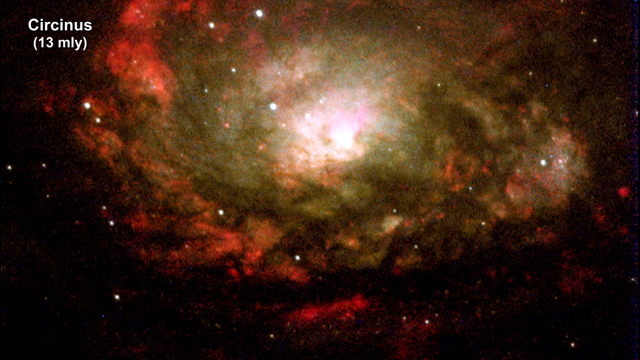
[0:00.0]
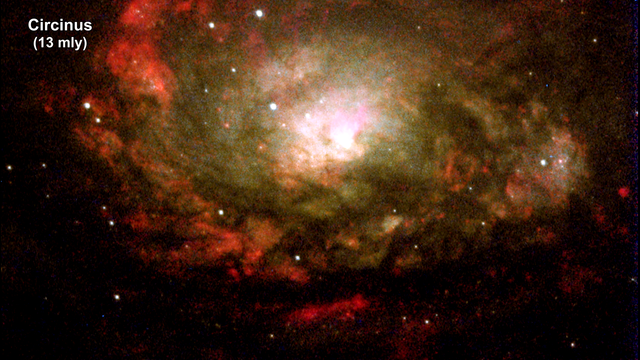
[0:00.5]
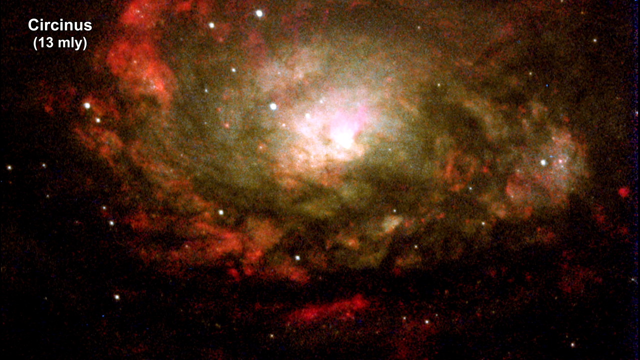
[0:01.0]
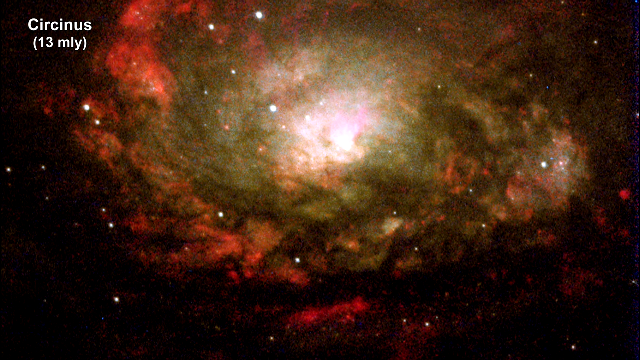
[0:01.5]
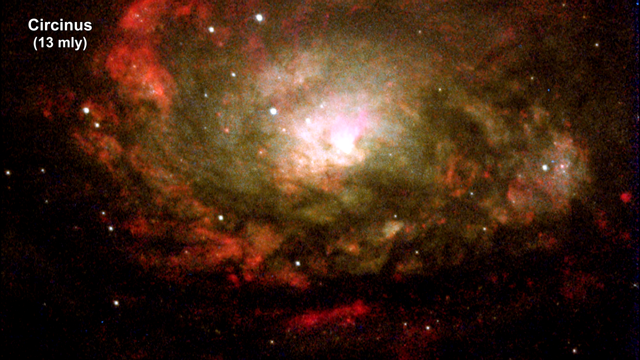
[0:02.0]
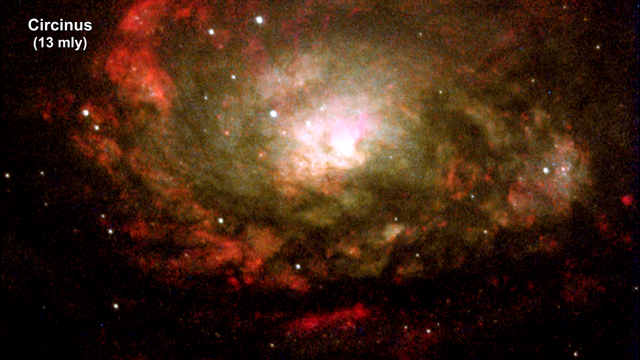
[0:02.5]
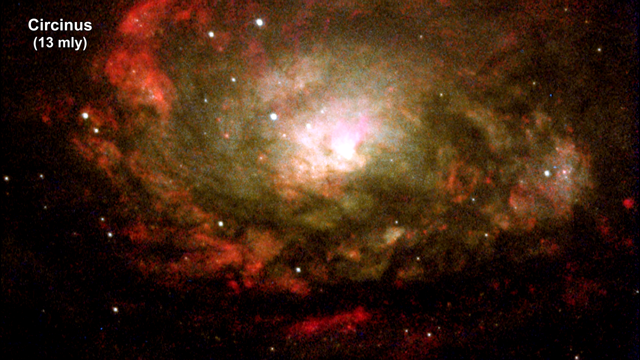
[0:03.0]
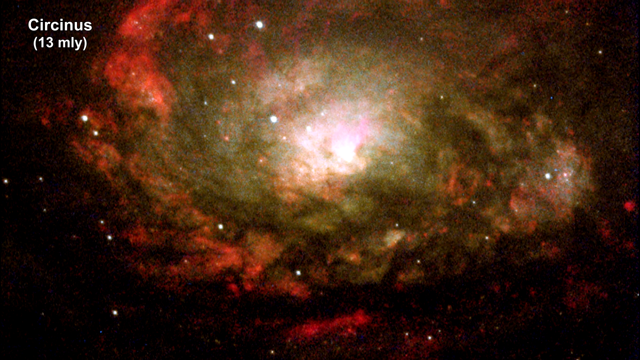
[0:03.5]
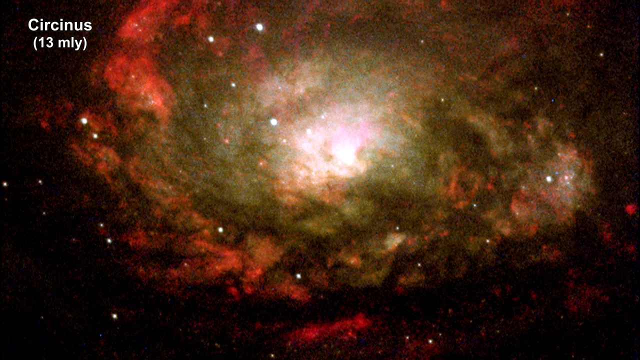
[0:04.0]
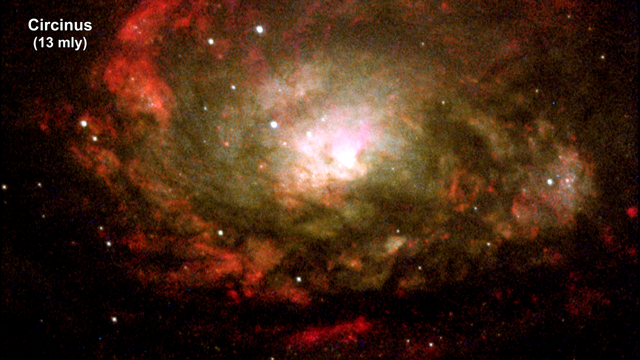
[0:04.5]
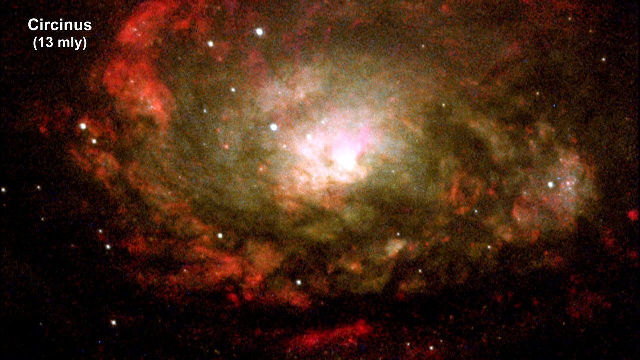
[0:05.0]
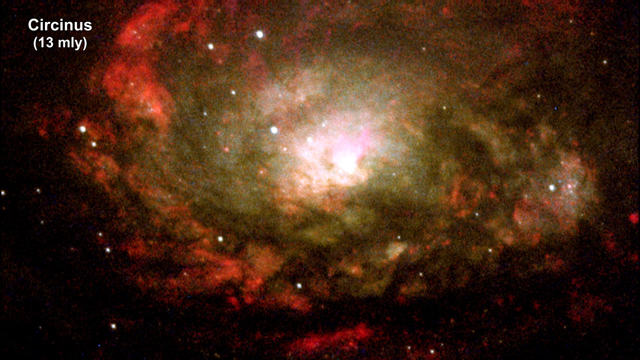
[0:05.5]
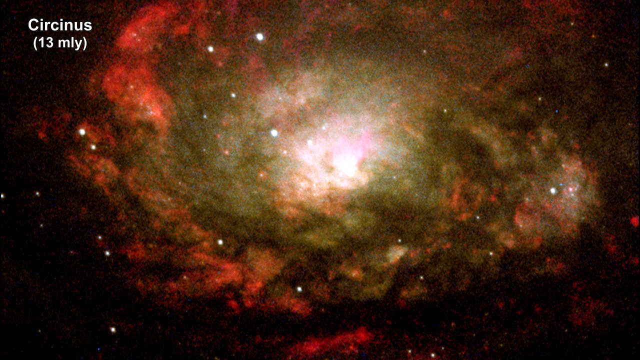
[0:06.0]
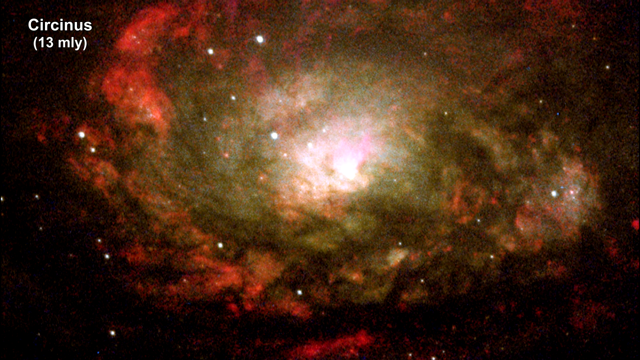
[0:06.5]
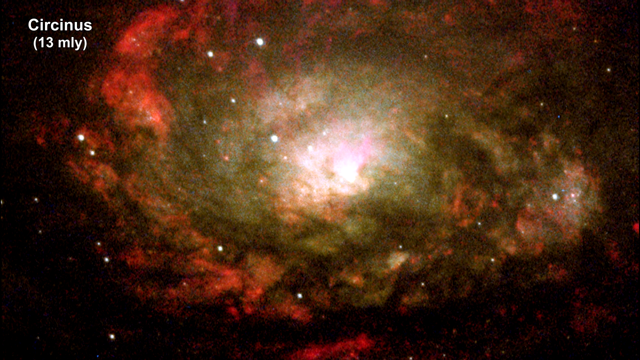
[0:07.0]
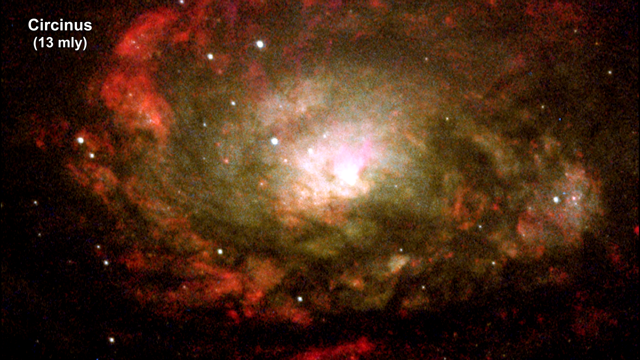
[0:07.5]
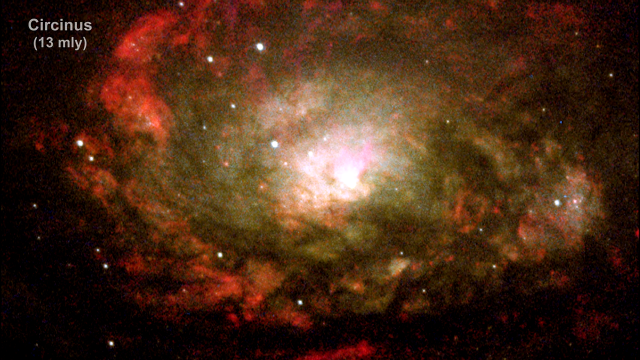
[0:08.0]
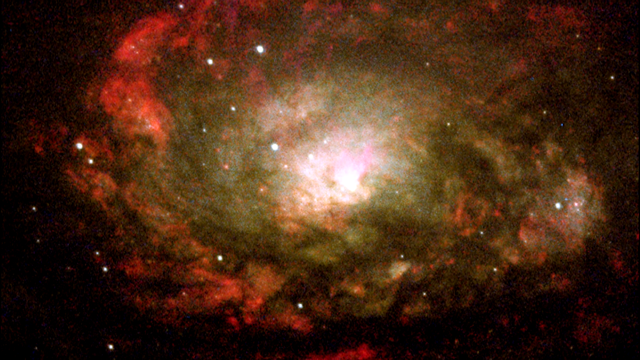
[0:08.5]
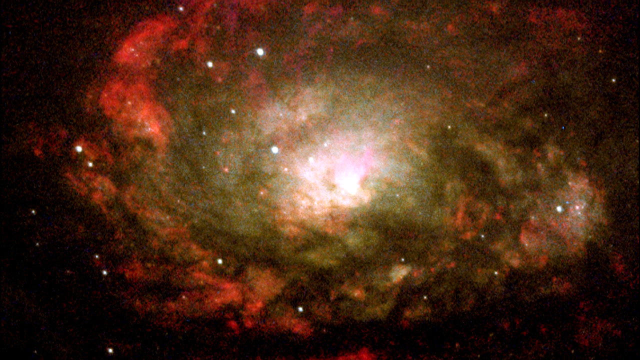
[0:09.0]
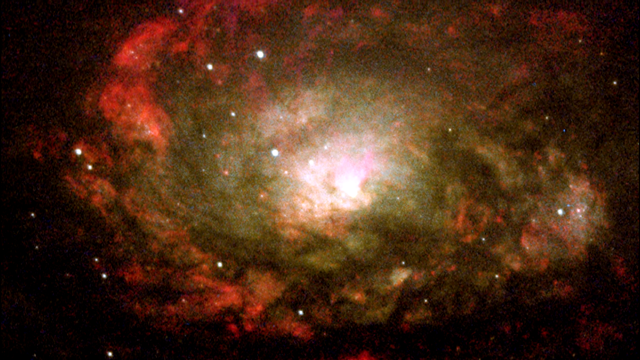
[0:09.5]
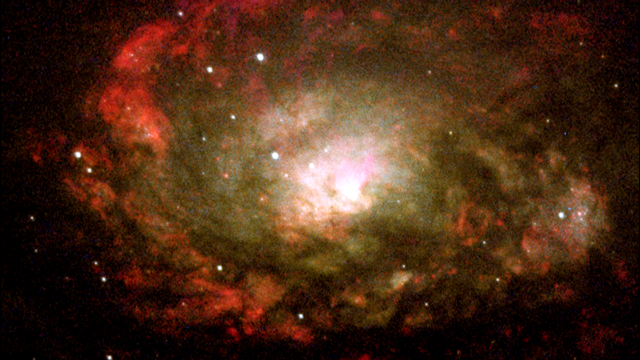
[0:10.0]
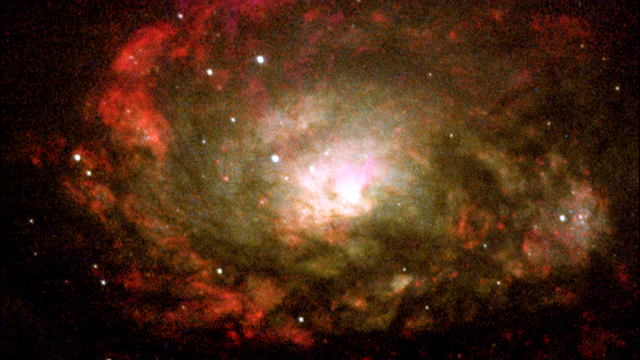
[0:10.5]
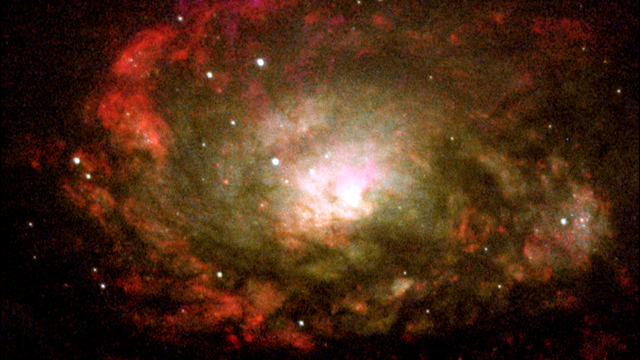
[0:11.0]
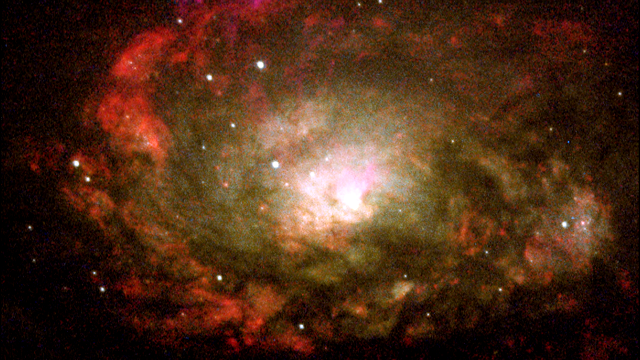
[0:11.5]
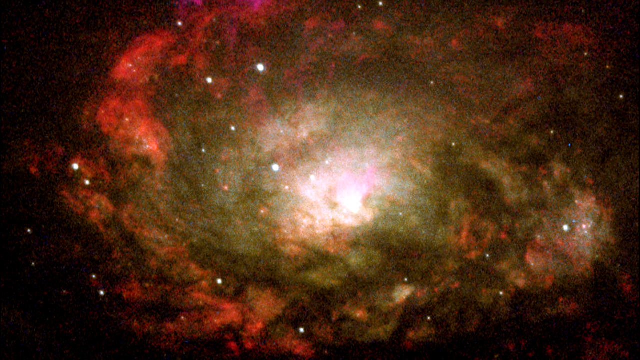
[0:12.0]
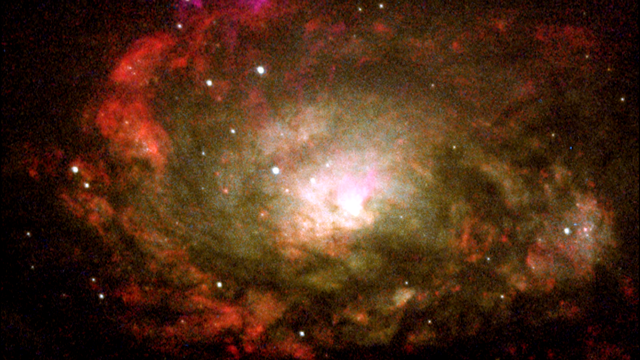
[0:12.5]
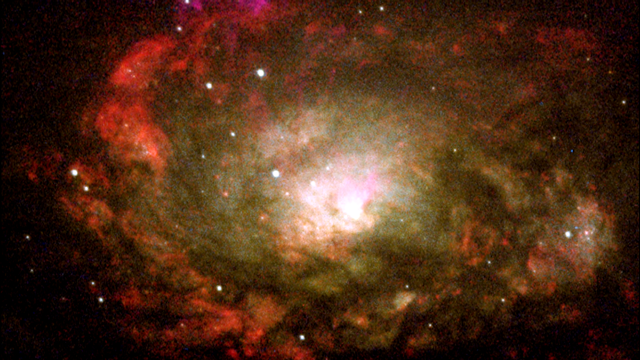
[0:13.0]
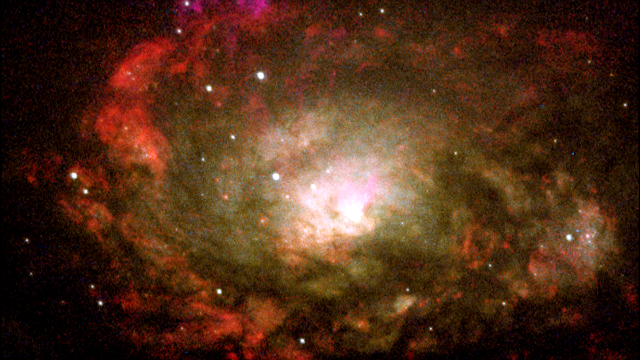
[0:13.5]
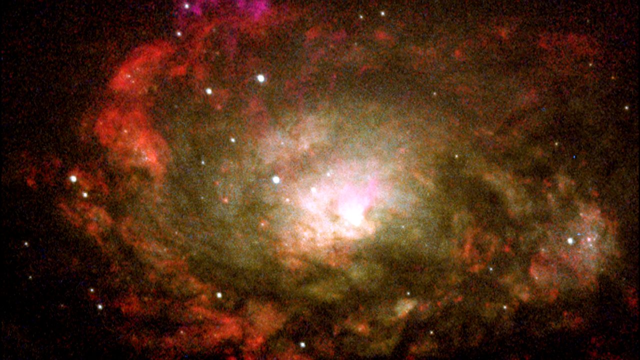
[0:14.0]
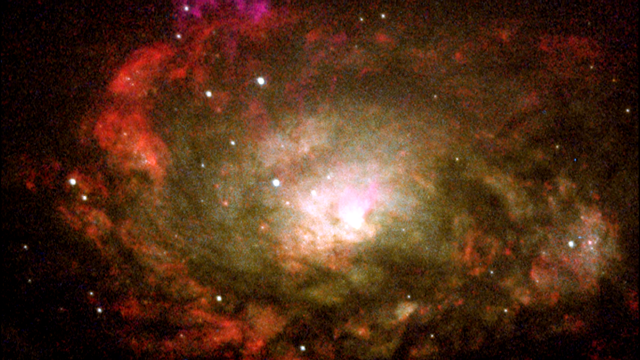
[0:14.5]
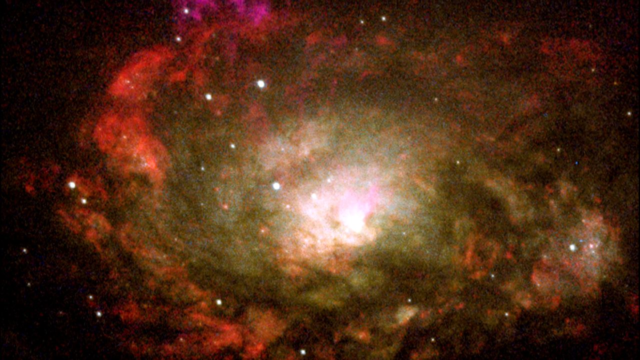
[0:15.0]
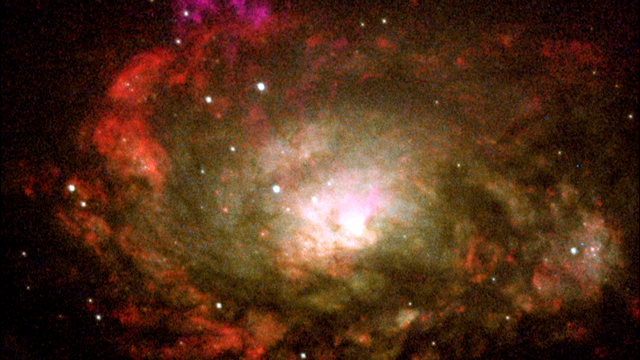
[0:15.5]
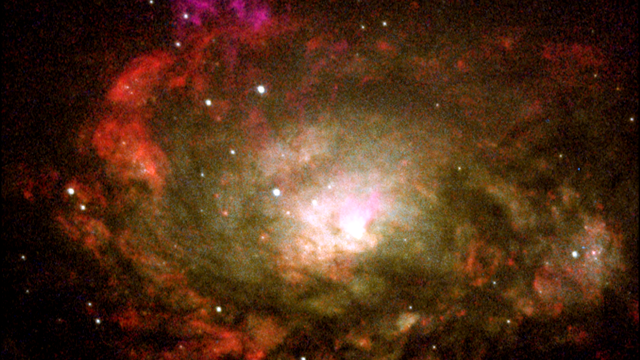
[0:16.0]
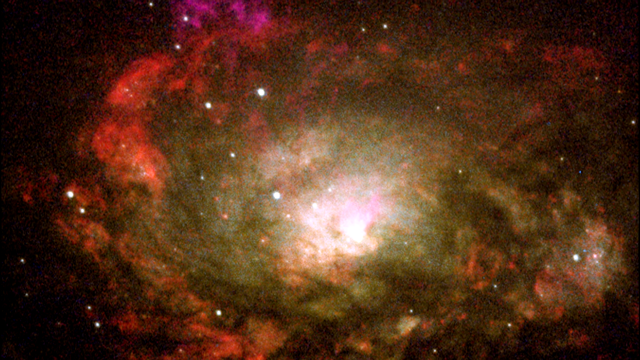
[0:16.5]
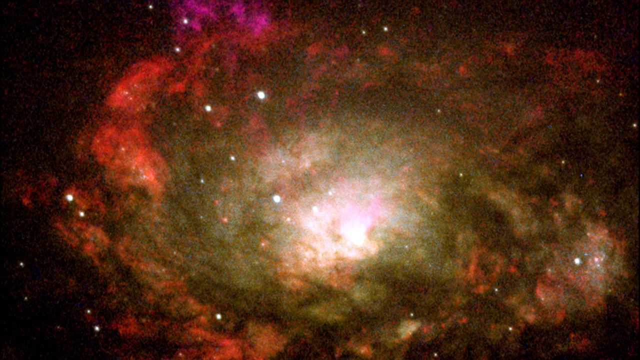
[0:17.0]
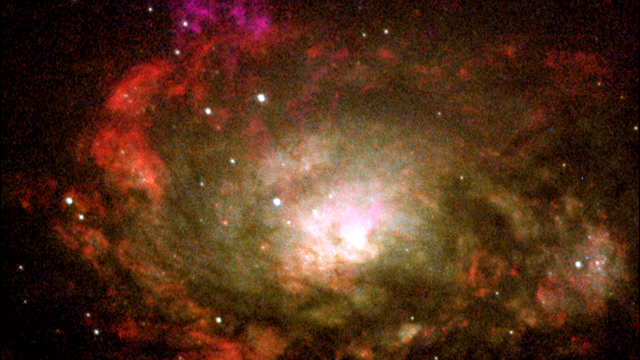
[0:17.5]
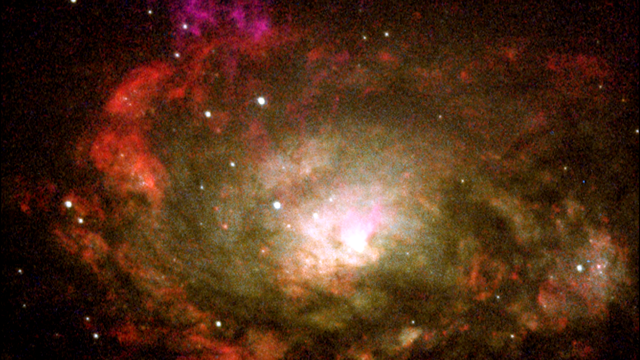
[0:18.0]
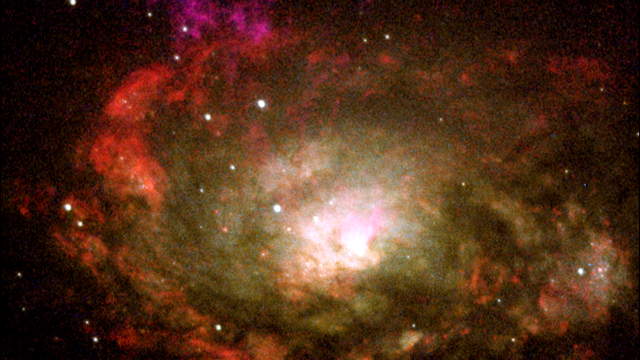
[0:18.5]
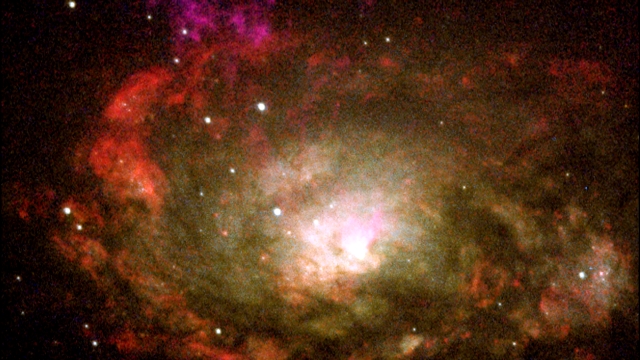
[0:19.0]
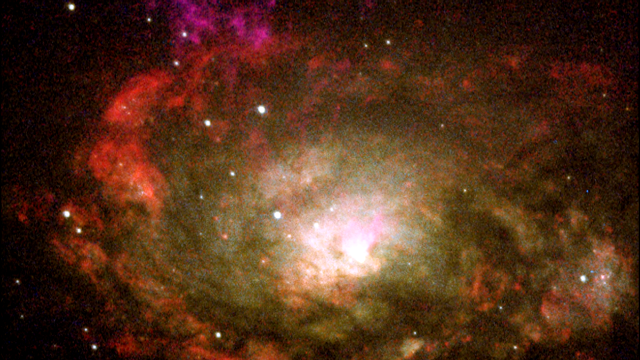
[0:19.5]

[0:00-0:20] The video shows a Circinus in the sky, with multiple smaller stars or planets visible within it. The video appears to be of just one image, and the view appears to pan up and down over it. The image is like a red cloud with darker bits and a very light bit emanating from the middle. There are lots of little spots of various shades within the cloud, presumably planets, and behind the cloud is a black part that could be the rest of the universe. On the top left of the video, text reads "Circinus" and, in brackets, "13 mly". This appears to be a large object in orbit and seems to be the main focus. Lots of smaller stars or dots are around this big main image, and a very strong bright light comes from the center of the big cloud-like shape.